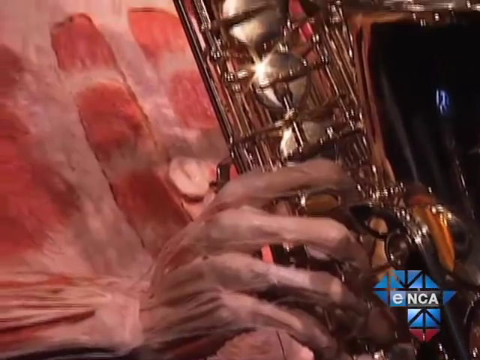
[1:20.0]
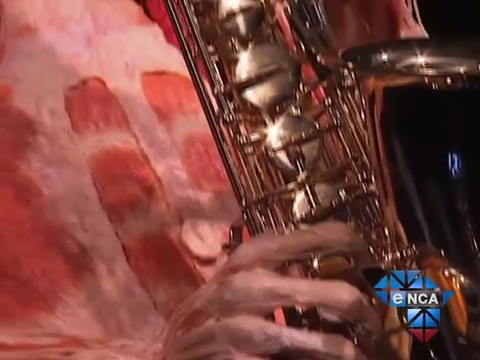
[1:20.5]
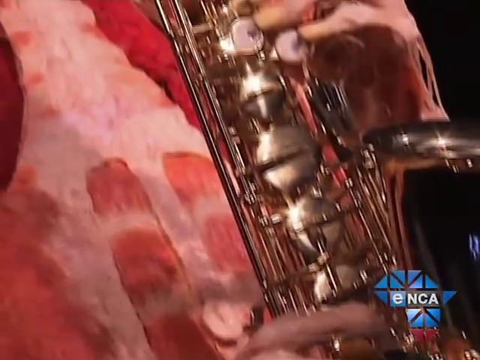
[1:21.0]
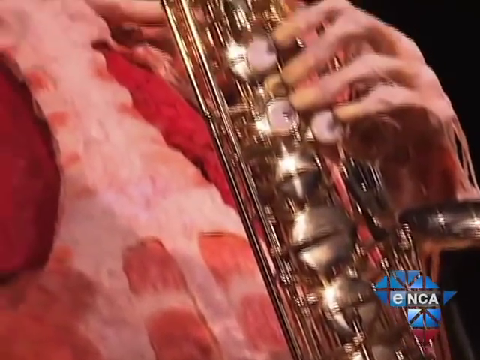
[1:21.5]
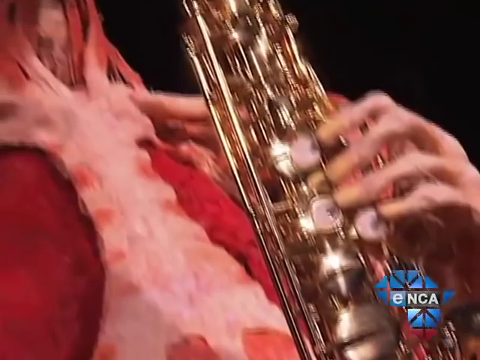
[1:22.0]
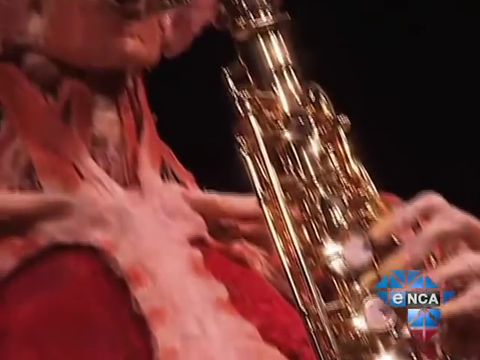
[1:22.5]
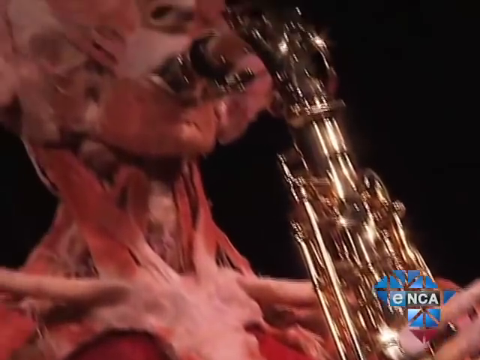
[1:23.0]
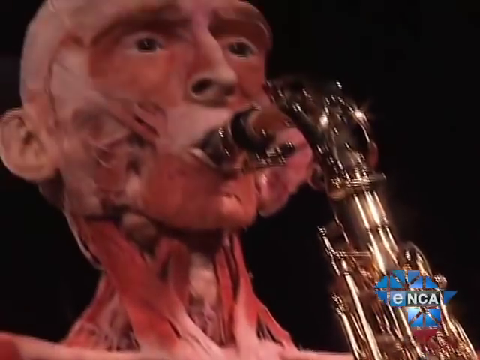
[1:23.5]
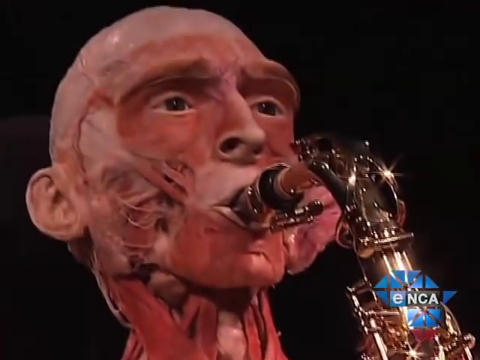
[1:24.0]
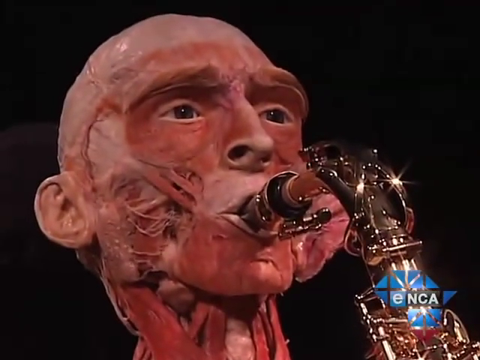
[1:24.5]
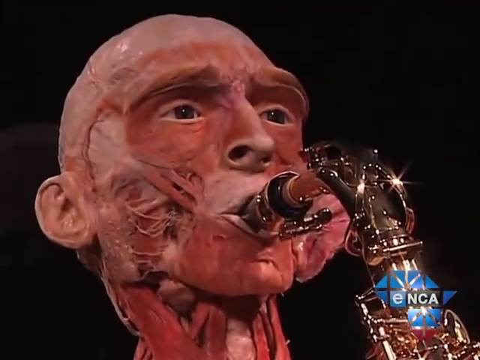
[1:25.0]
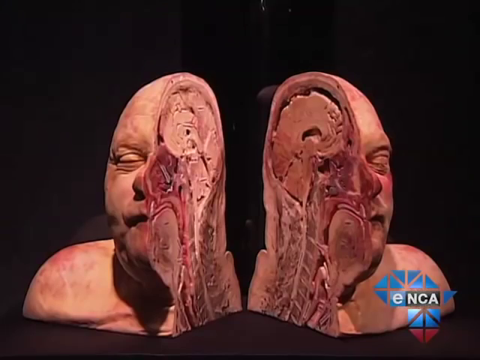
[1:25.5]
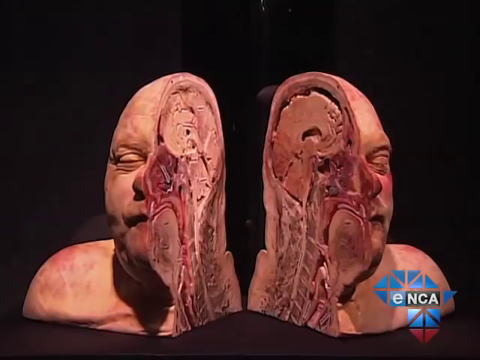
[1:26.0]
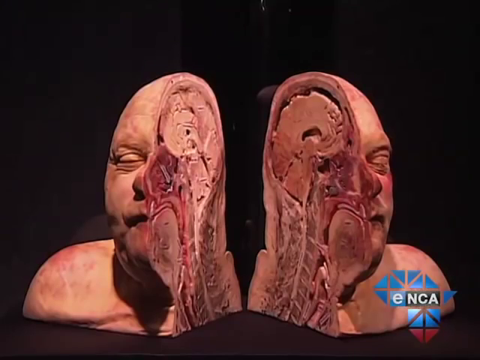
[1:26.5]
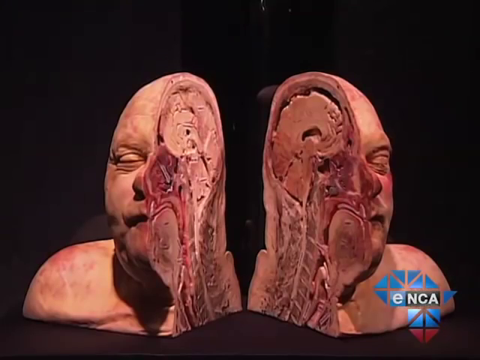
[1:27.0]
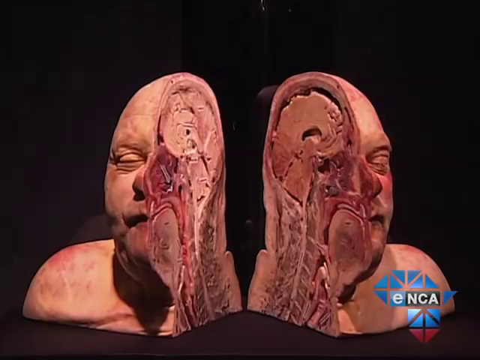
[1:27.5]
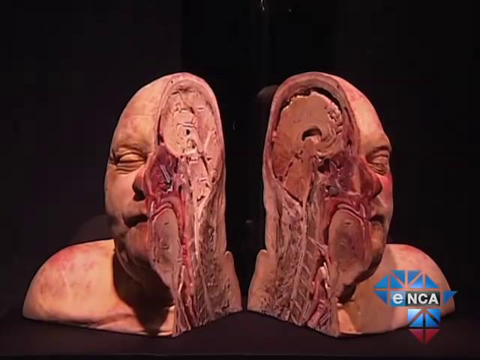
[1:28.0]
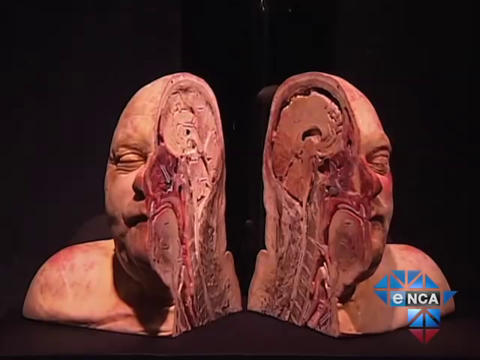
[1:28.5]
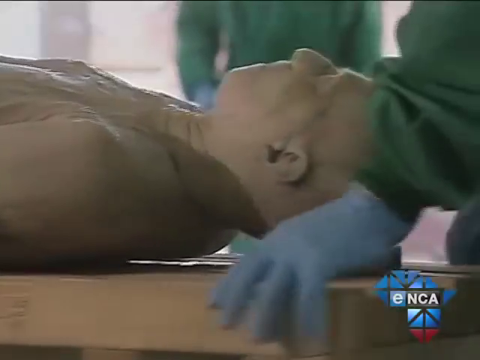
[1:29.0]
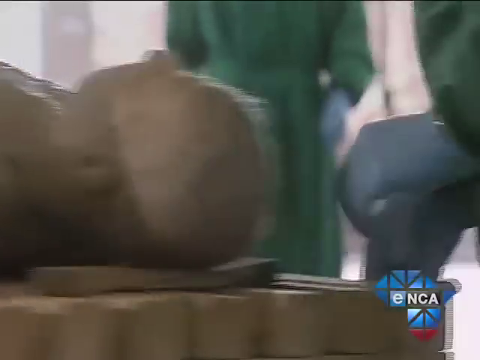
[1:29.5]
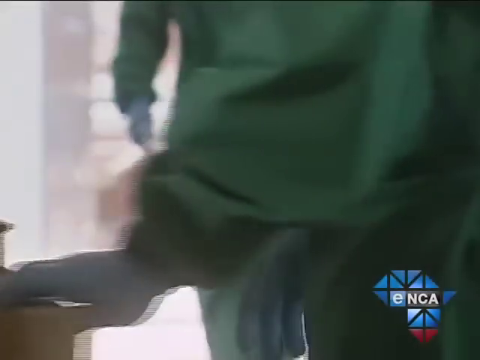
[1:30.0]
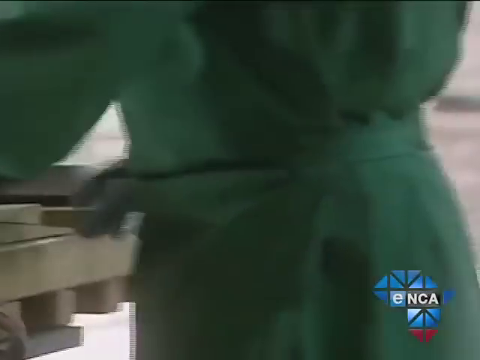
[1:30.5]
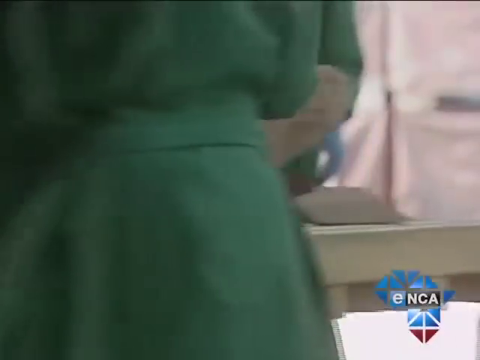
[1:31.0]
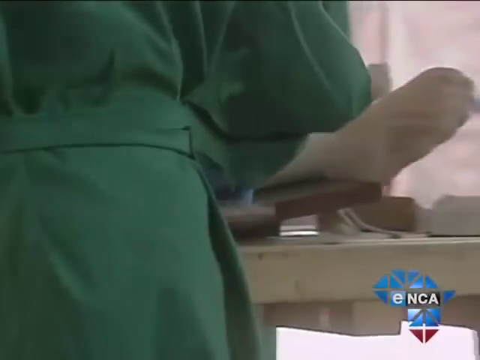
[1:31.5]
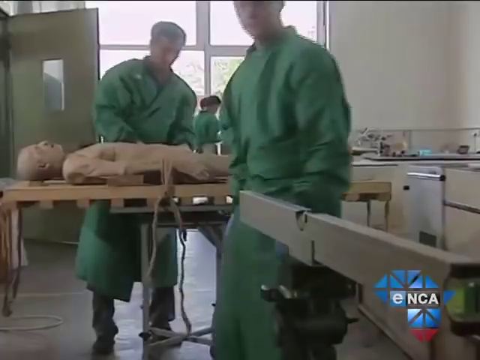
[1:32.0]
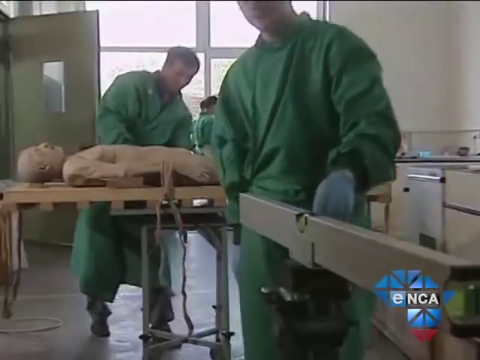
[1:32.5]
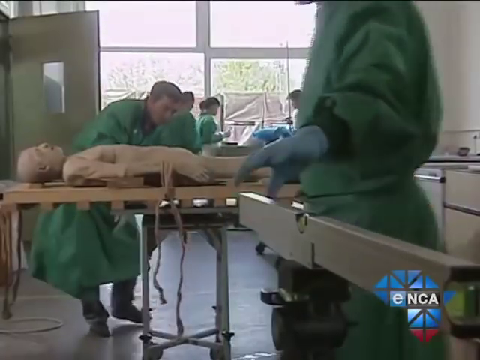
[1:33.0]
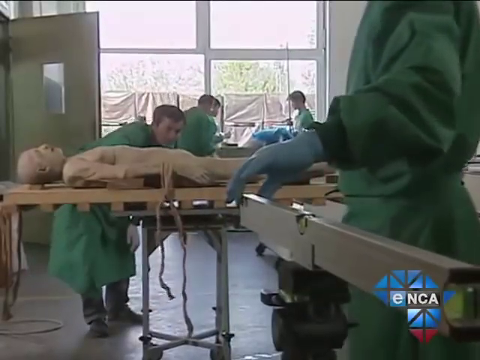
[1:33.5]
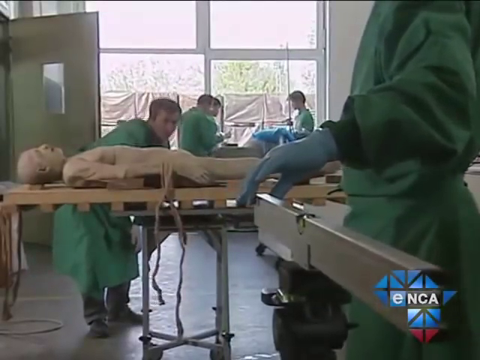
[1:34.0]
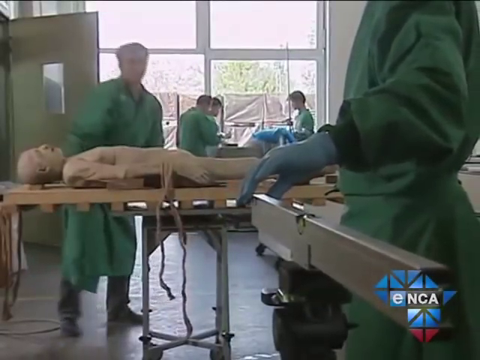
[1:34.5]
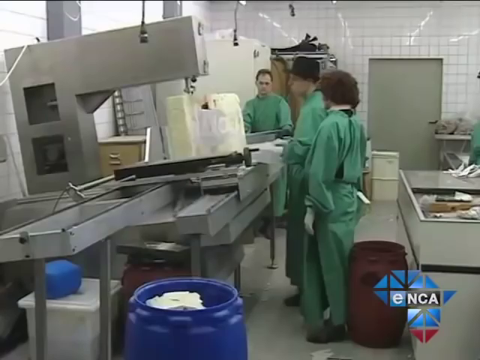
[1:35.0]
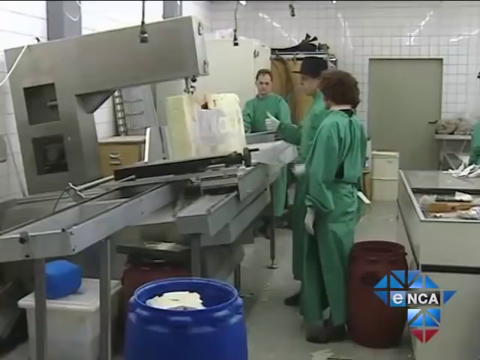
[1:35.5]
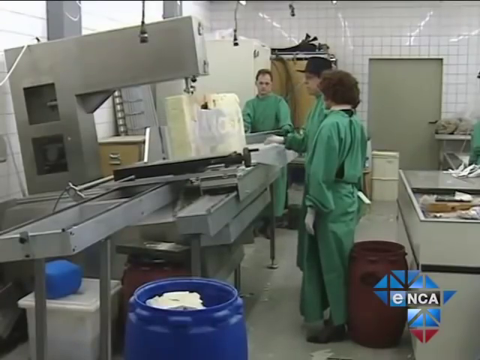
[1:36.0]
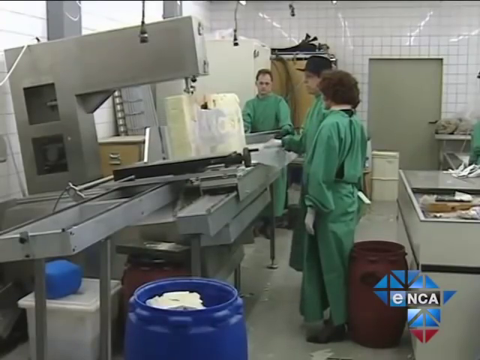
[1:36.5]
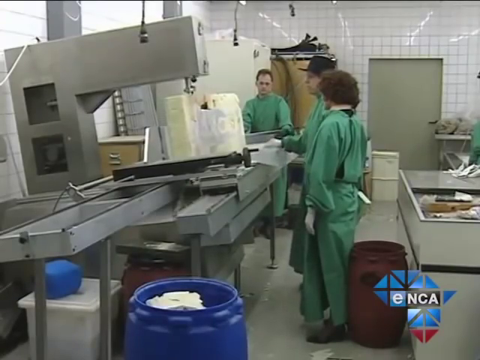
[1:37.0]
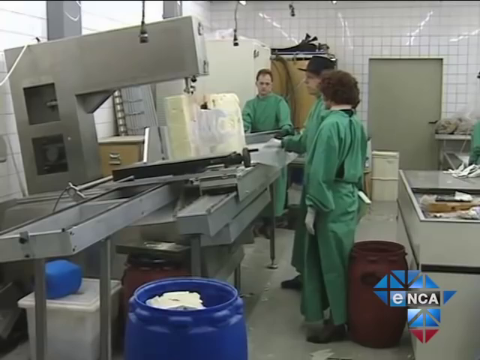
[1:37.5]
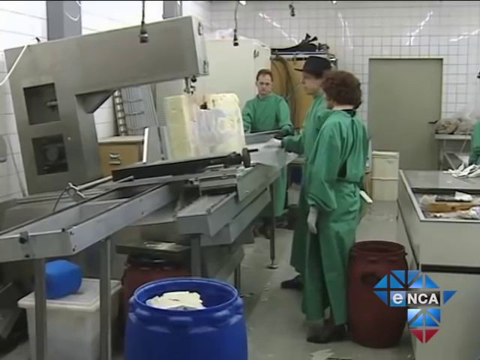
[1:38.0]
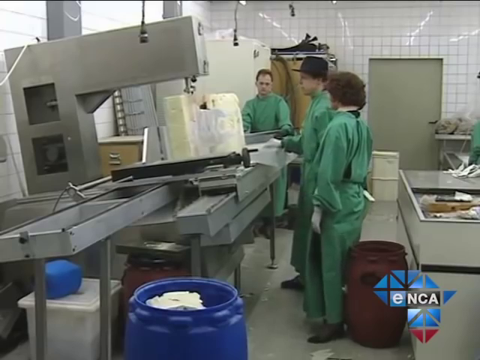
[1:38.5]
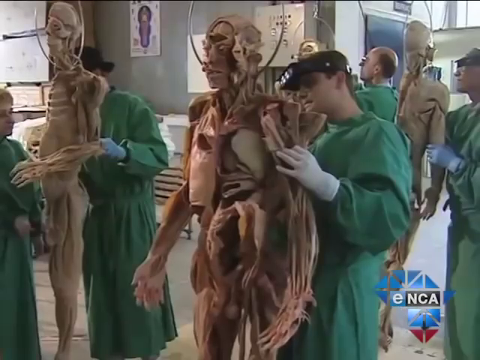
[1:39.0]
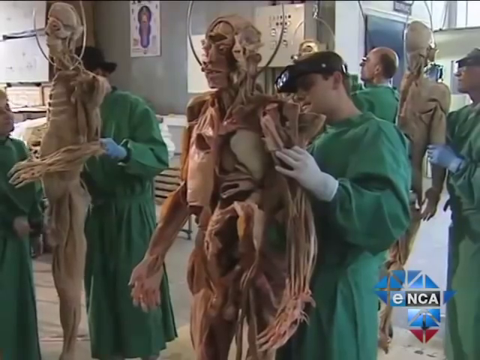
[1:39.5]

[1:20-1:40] The ENCA emblem appears in the lower right-hand corner. Human bodies, possibly donated cadavers, are shown with the outer skin layer removed, exposing the muscles, tendons and ligaments. One is a man playing a saxophone, and another has the head and body cut completely in half. The camera zooms in on the group who put the display together, who wear green gowns.